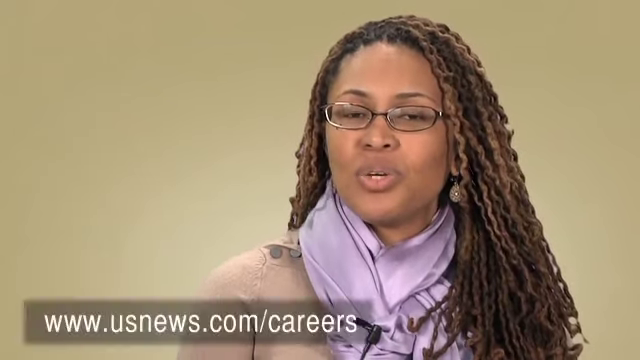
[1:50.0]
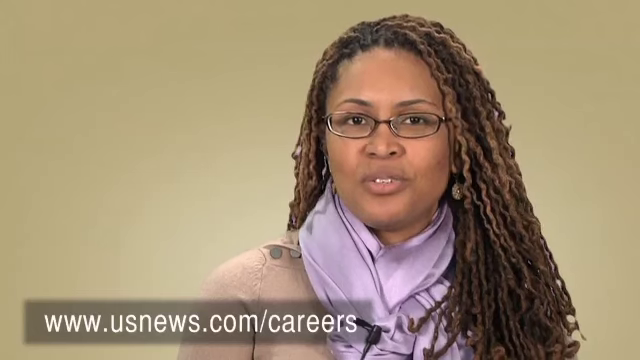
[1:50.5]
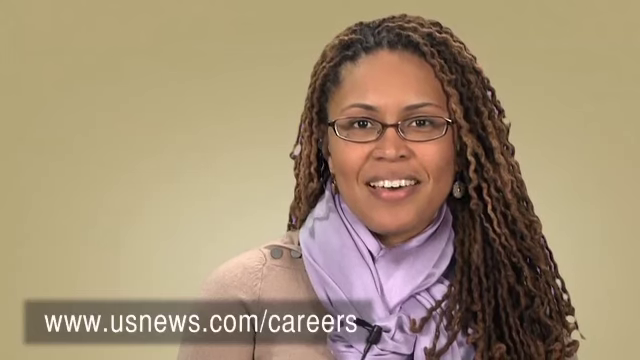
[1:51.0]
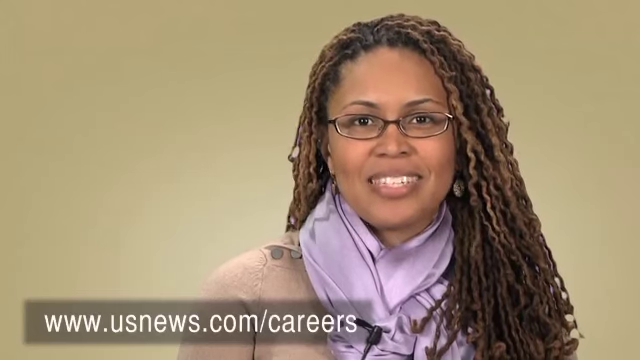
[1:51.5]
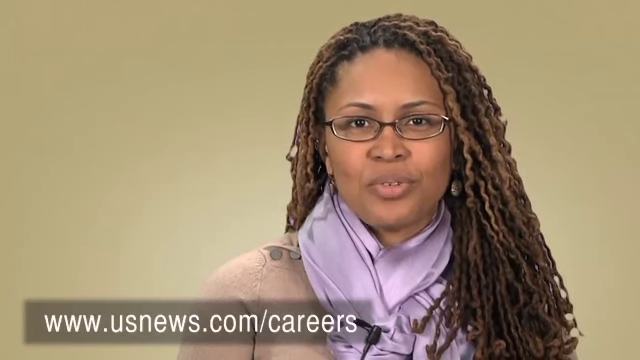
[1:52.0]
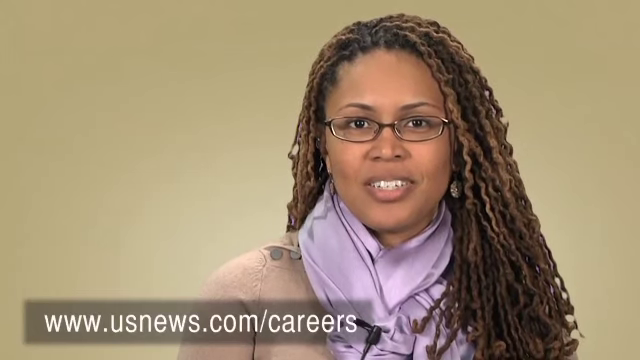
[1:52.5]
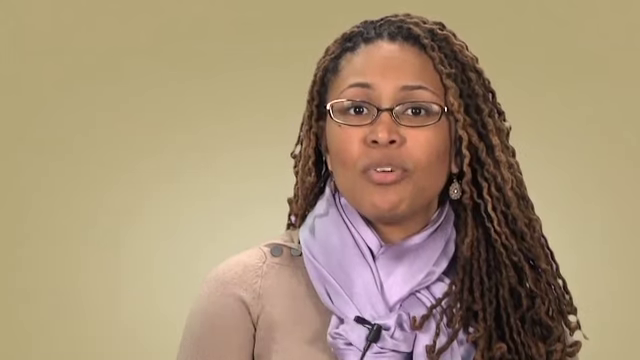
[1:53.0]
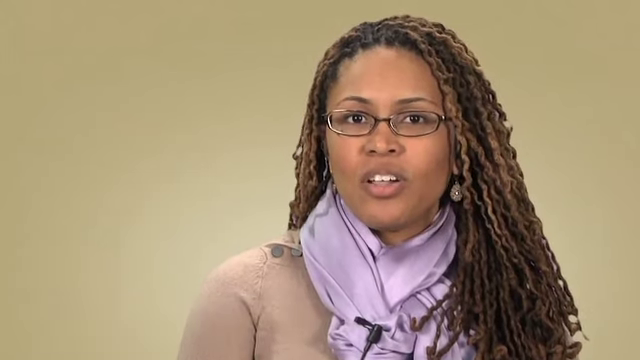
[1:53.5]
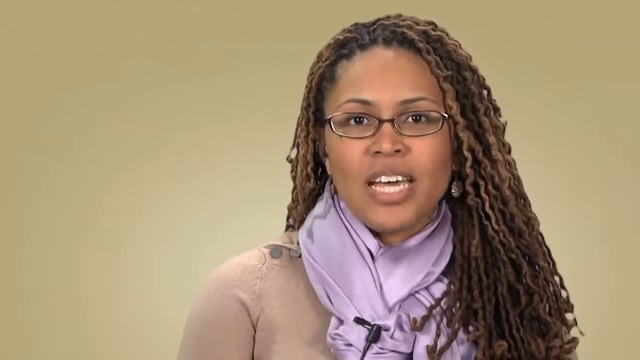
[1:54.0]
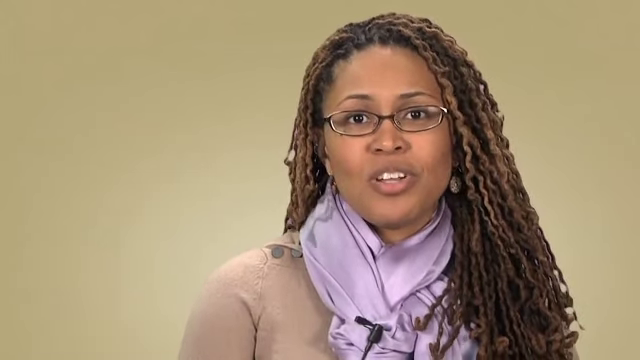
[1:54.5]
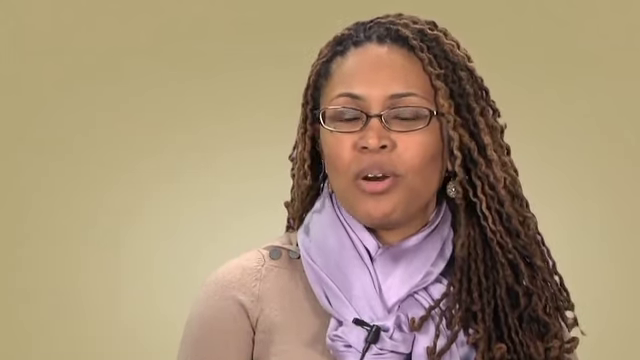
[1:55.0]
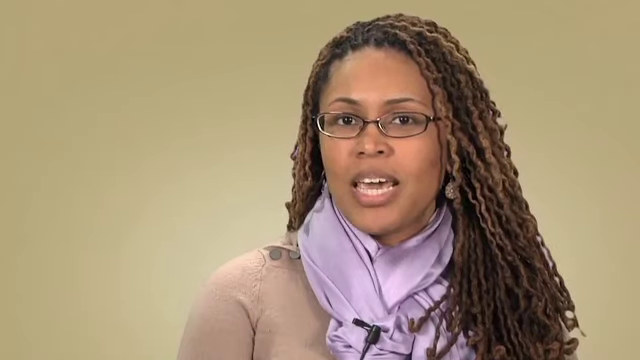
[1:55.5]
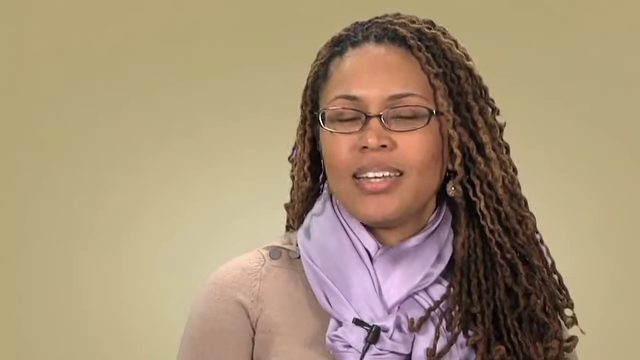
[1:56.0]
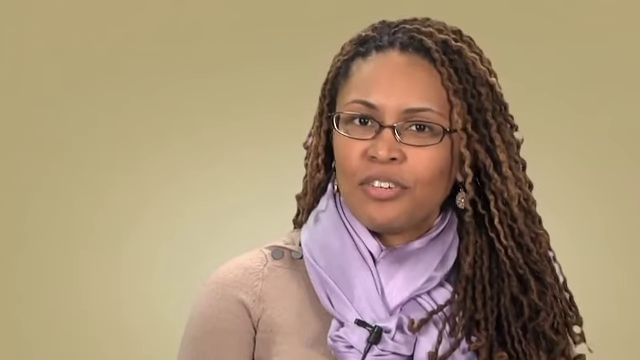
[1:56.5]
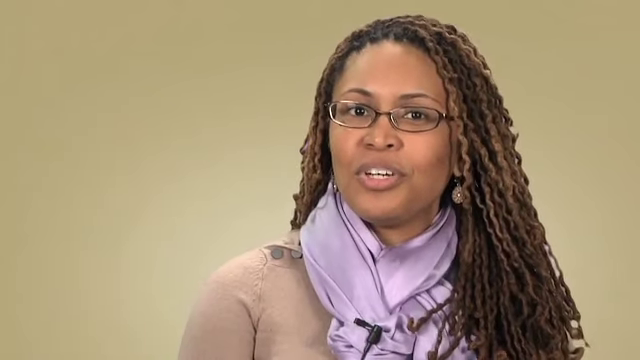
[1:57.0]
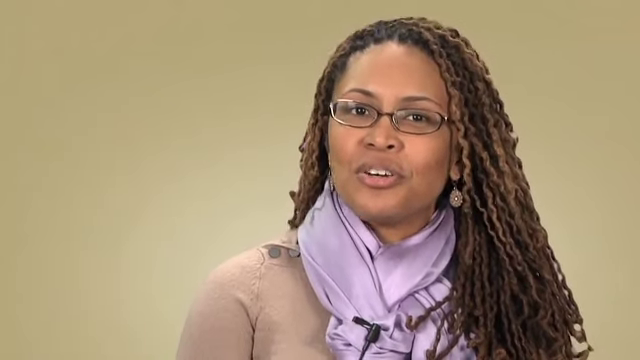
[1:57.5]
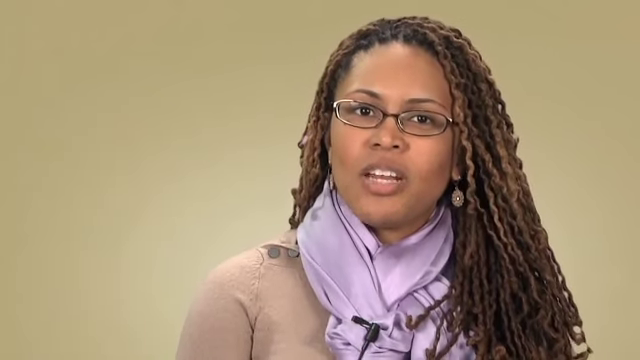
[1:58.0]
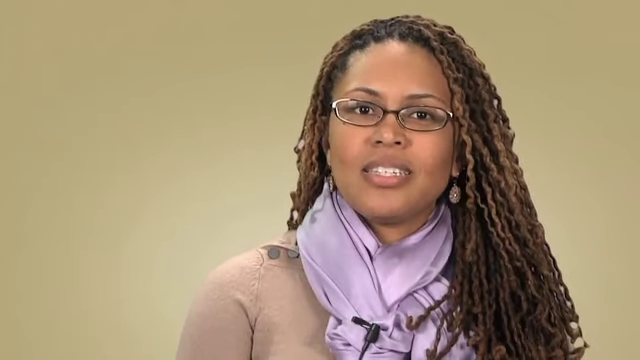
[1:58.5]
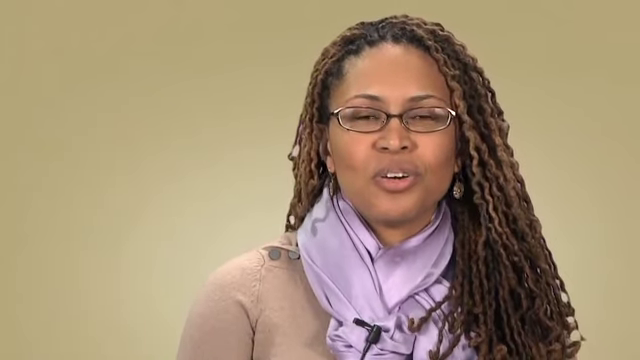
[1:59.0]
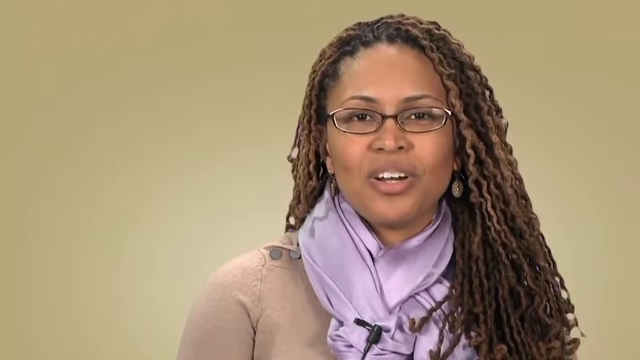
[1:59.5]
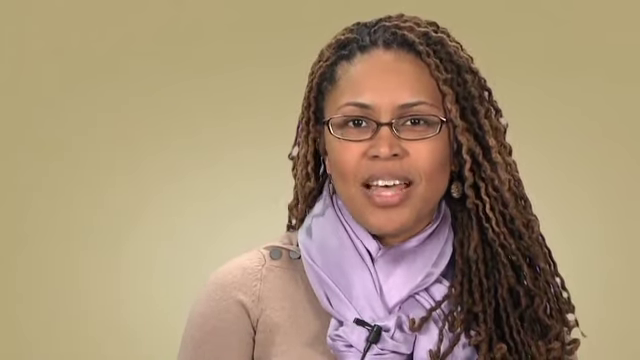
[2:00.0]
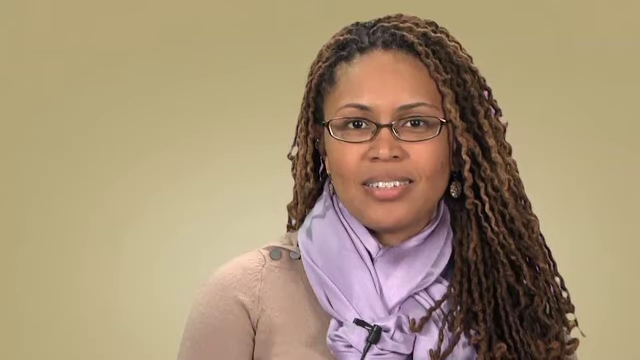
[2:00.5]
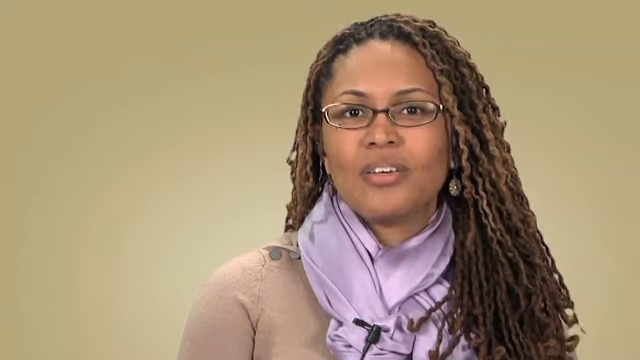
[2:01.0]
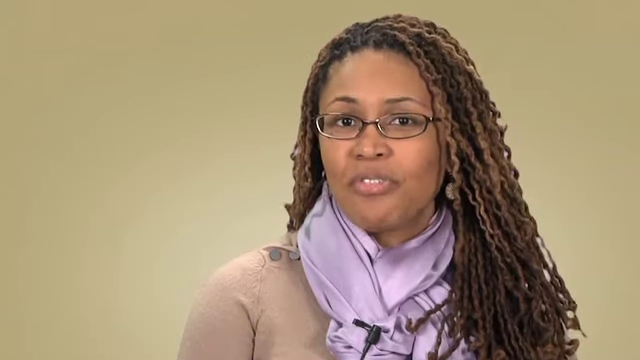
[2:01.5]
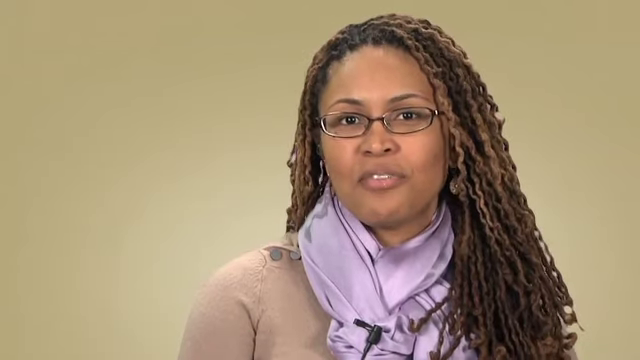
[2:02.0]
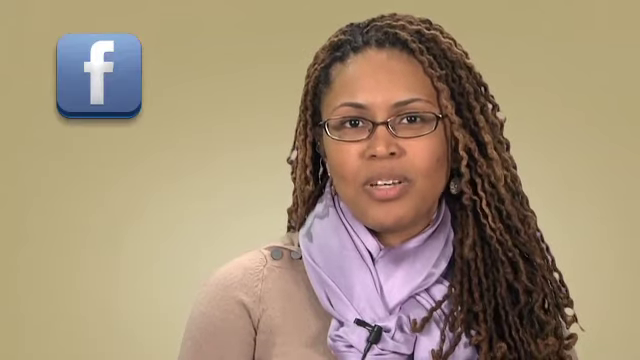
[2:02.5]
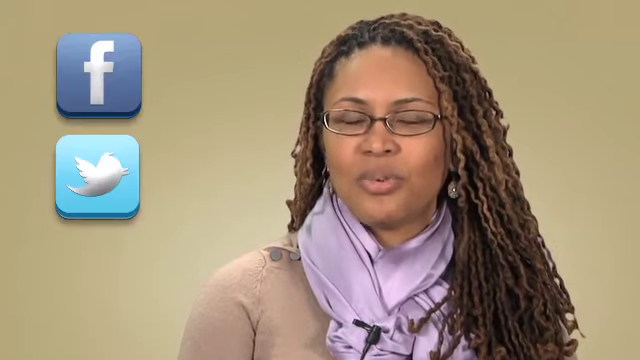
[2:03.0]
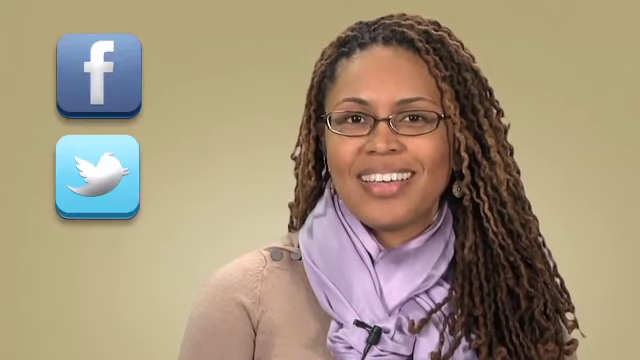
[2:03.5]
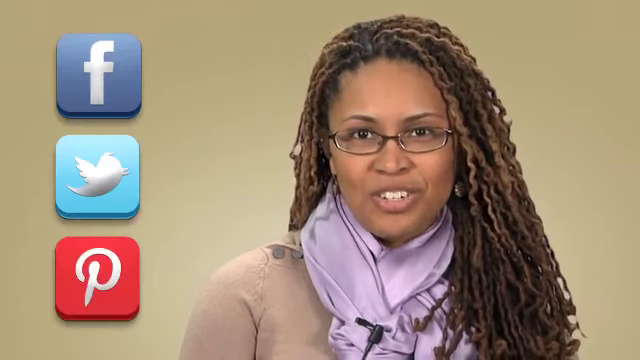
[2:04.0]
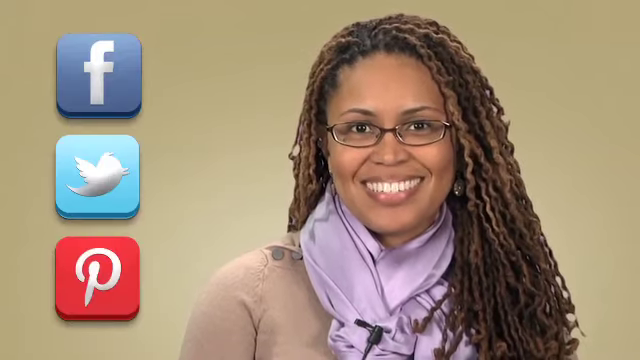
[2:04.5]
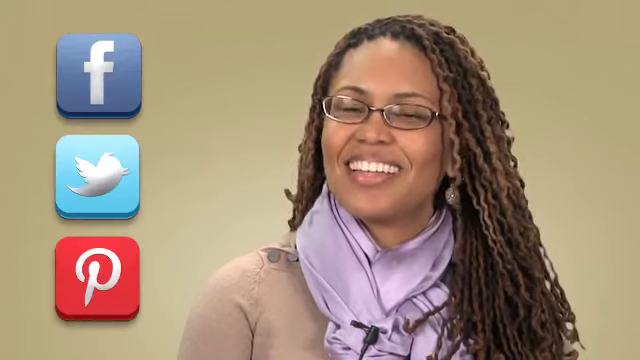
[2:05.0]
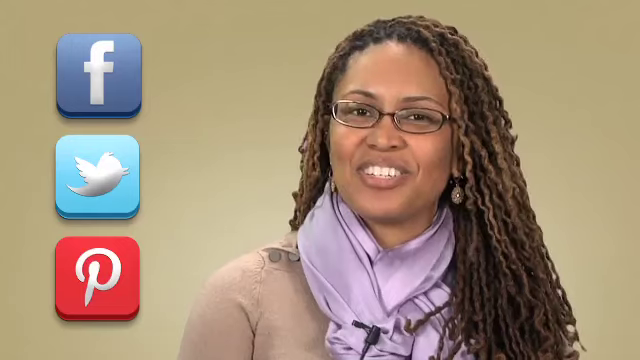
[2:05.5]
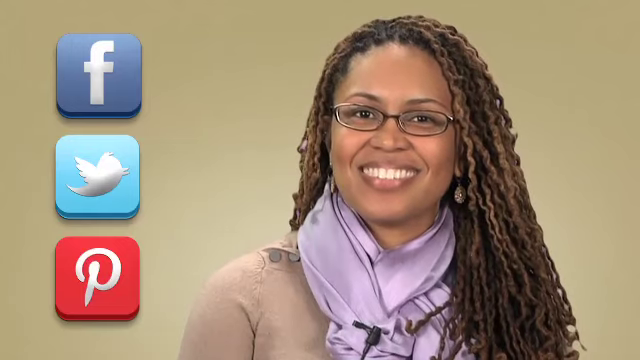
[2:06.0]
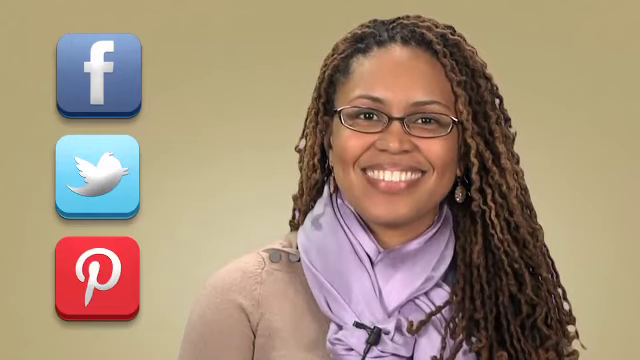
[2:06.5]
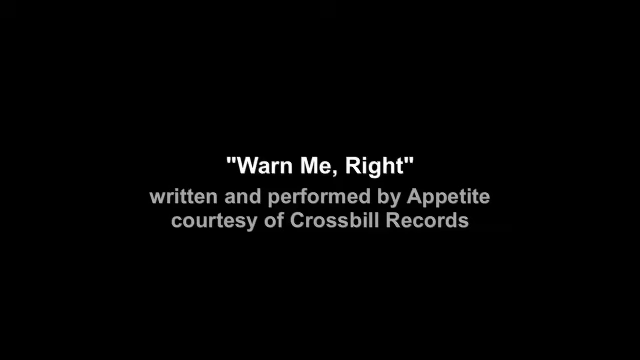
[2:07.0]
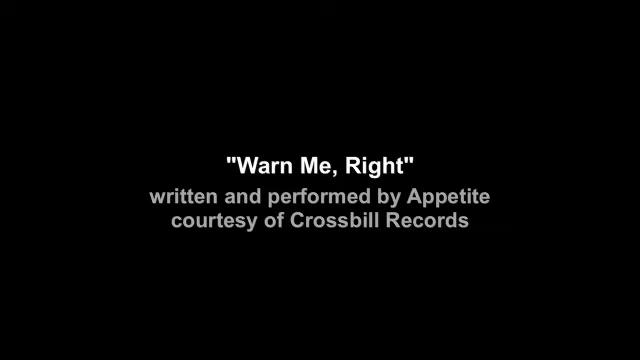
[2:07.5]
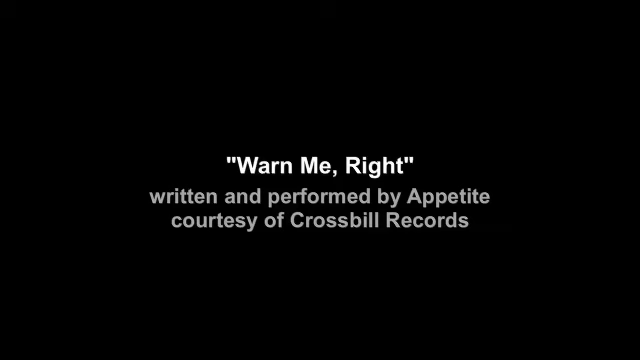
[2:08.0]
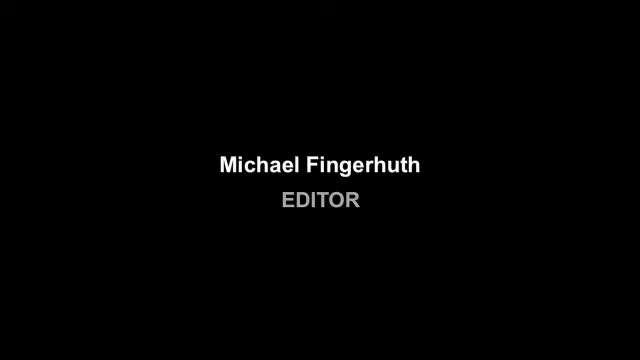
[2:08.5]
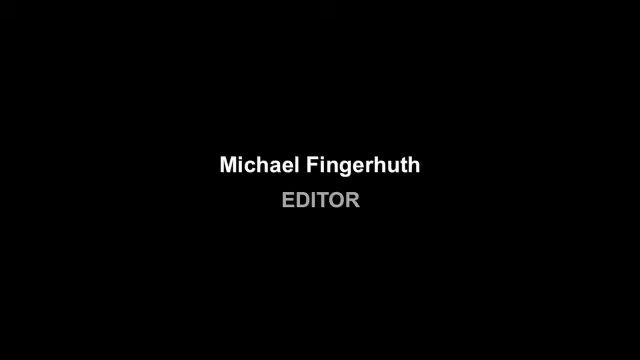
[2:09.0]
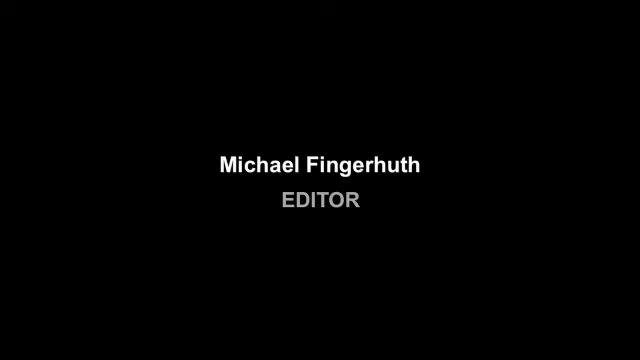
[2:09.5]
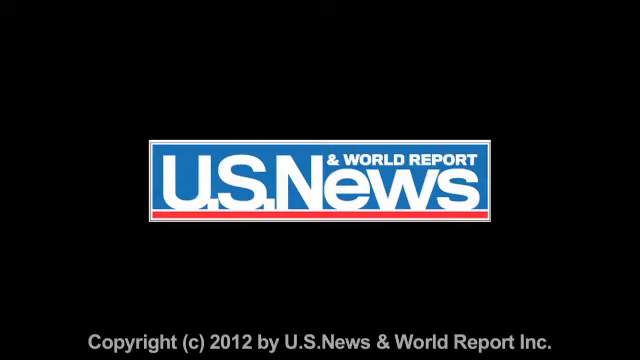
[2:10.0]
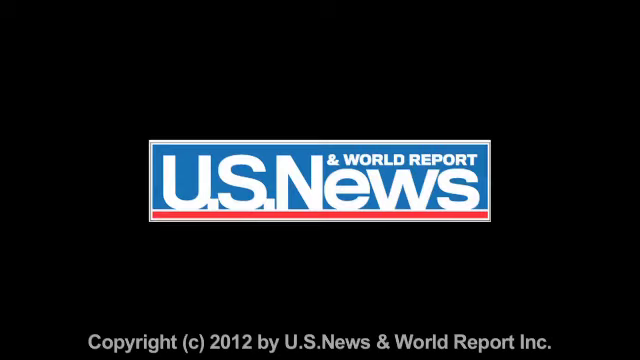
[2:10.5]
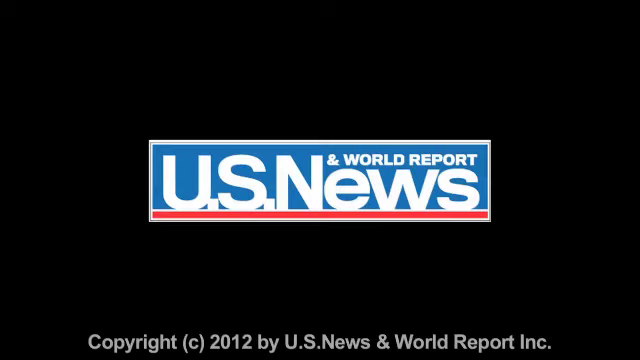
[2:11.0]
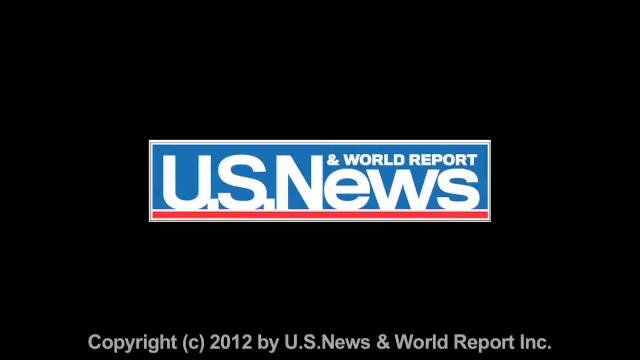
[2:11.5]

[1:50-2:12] The African-American woman who has been talking wears glasses, a brown sweater and a purple scarf that looks like multiple scarves in one, and her hair is braided down past her shoulders. A caption below her shows the website "usnews.com/careers". A small black microphone is on her scarf, and her earrings look silver. A Facebook logo pops up, then a Twitter logo, then a logo that looks like Pinterest. Finally a caption appears: "Horn me right, written and performed by Appetite, courtesy of Crossbill Records."